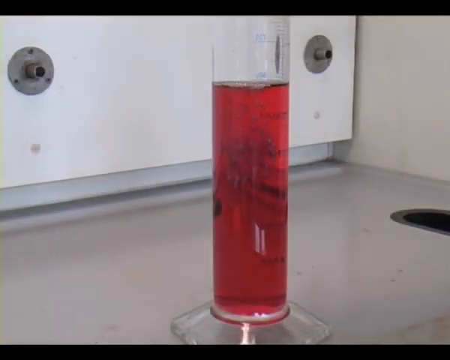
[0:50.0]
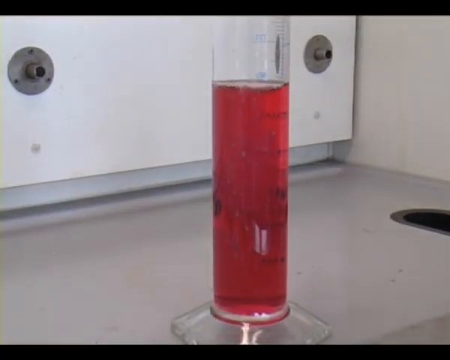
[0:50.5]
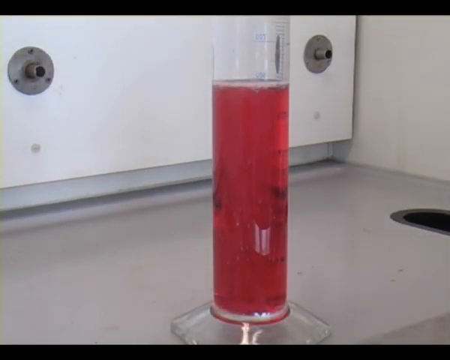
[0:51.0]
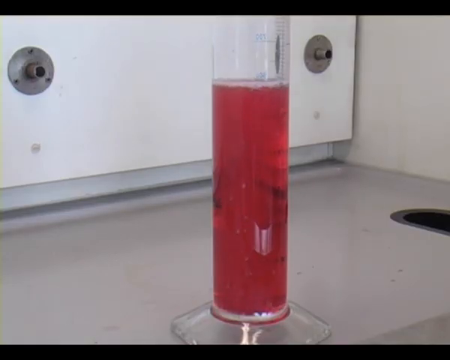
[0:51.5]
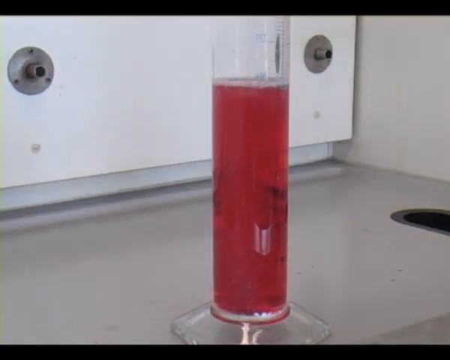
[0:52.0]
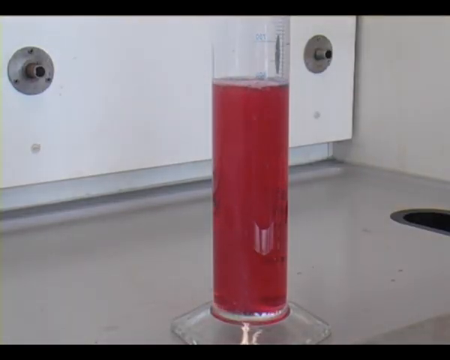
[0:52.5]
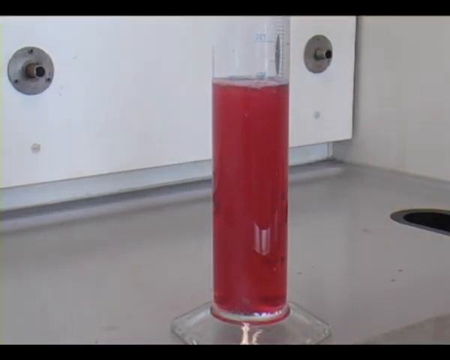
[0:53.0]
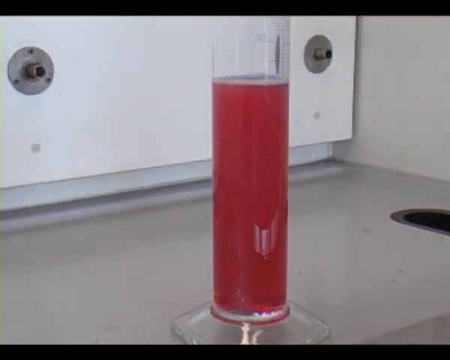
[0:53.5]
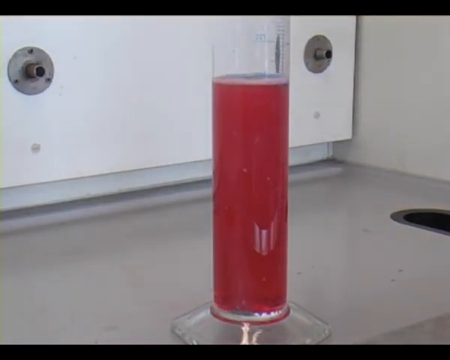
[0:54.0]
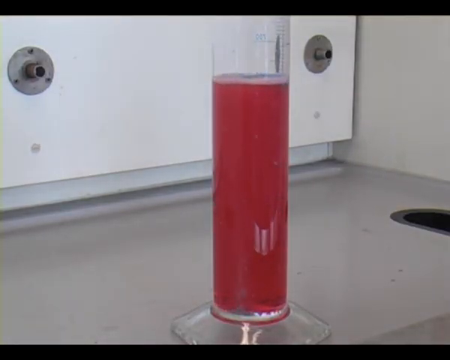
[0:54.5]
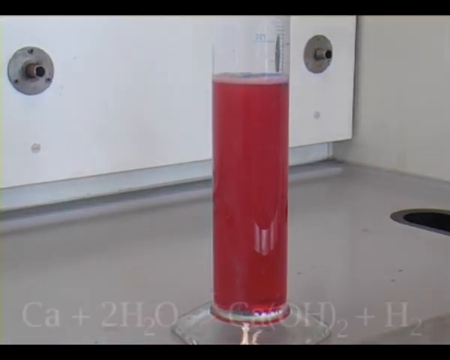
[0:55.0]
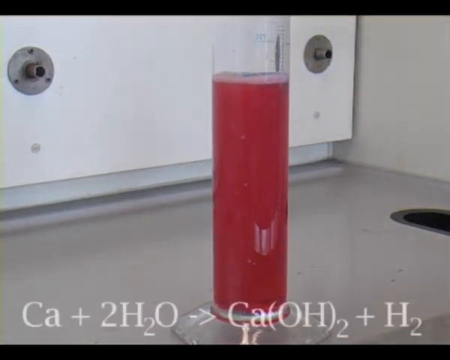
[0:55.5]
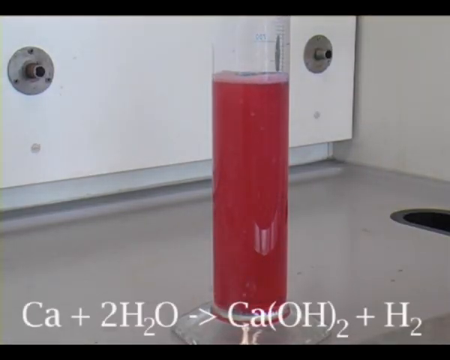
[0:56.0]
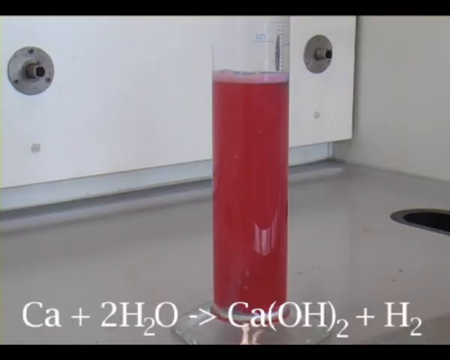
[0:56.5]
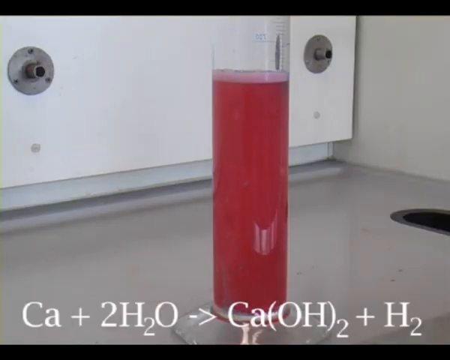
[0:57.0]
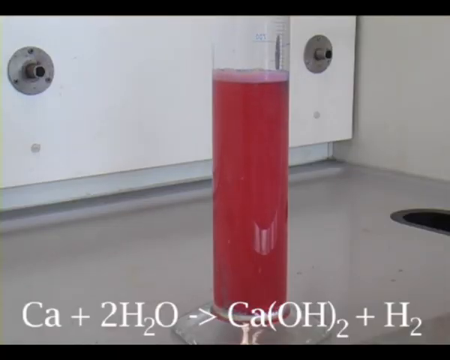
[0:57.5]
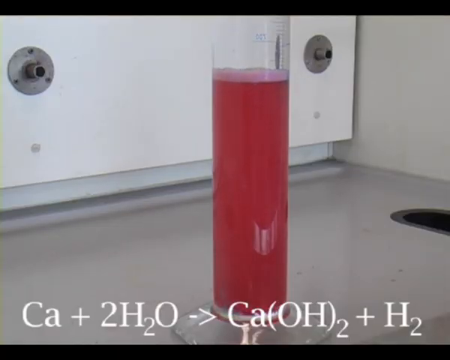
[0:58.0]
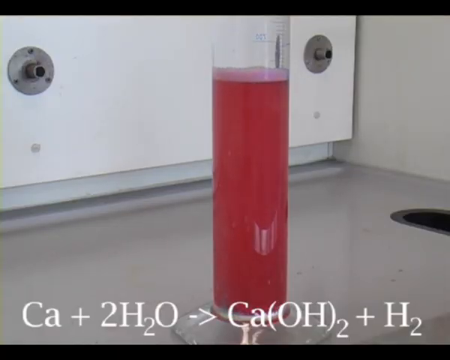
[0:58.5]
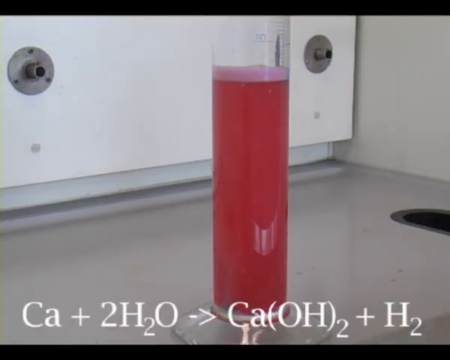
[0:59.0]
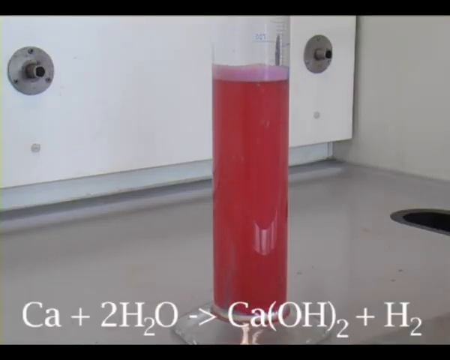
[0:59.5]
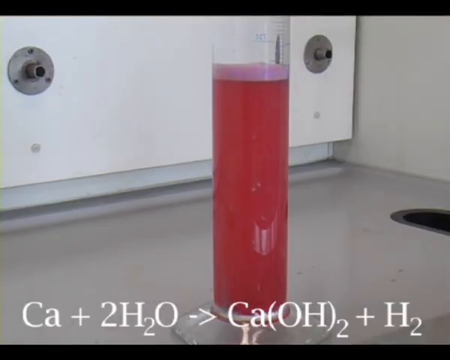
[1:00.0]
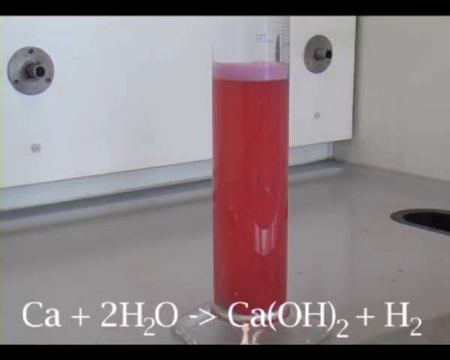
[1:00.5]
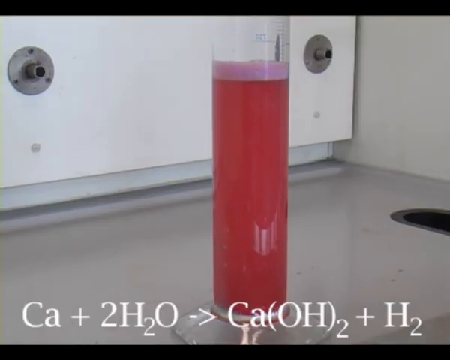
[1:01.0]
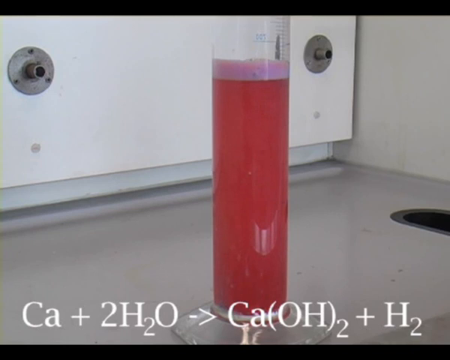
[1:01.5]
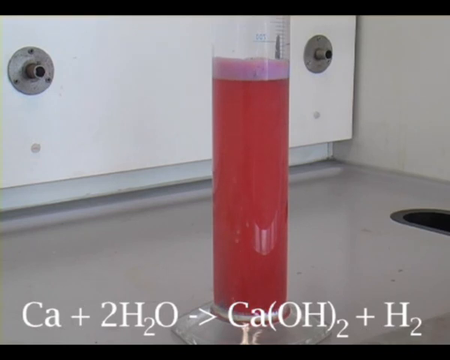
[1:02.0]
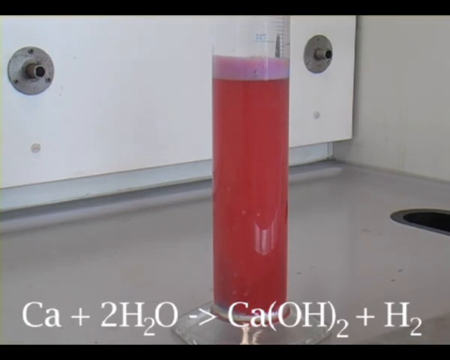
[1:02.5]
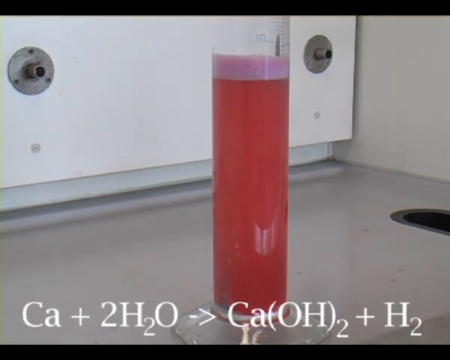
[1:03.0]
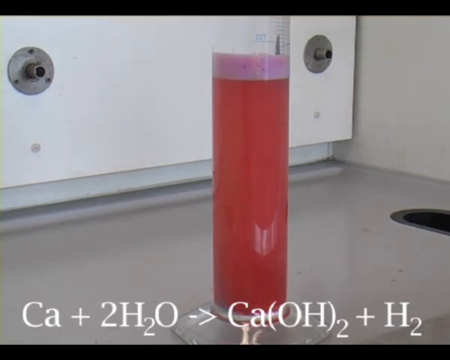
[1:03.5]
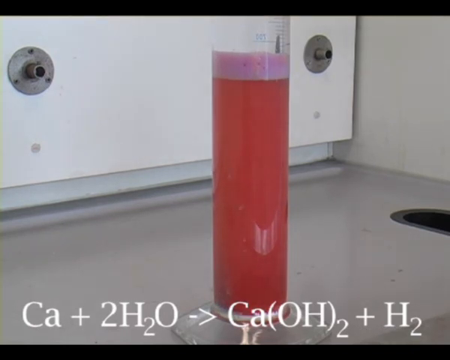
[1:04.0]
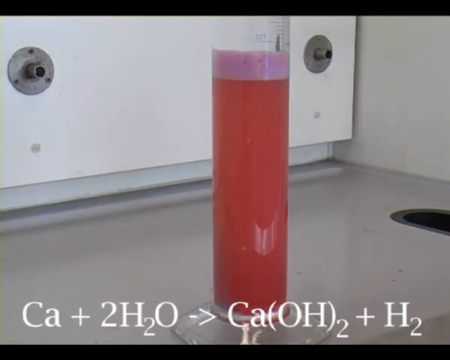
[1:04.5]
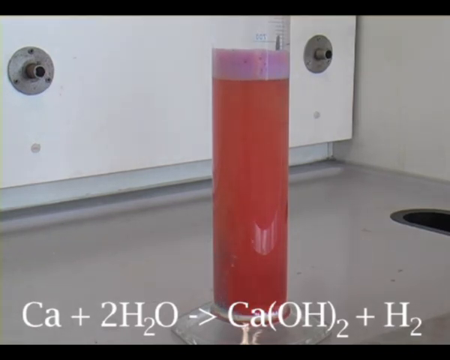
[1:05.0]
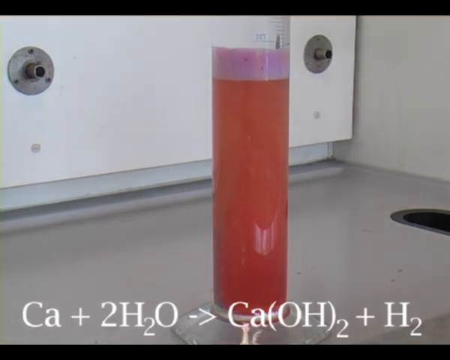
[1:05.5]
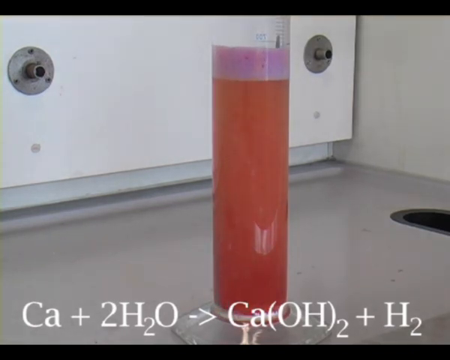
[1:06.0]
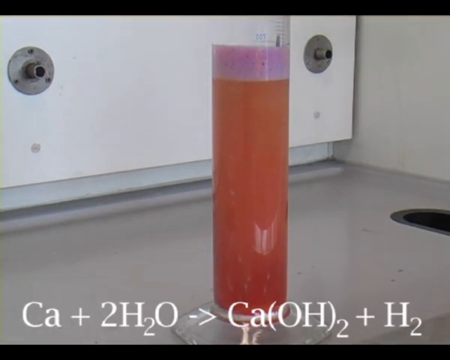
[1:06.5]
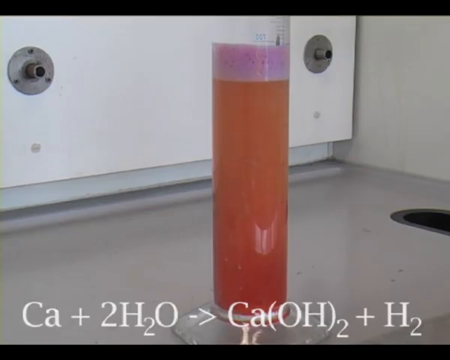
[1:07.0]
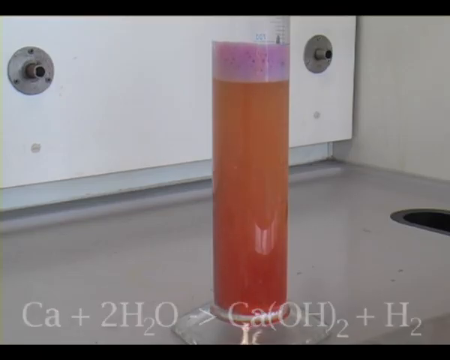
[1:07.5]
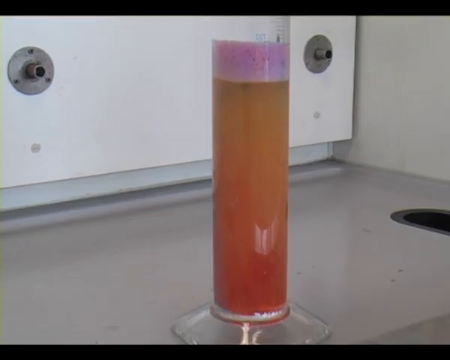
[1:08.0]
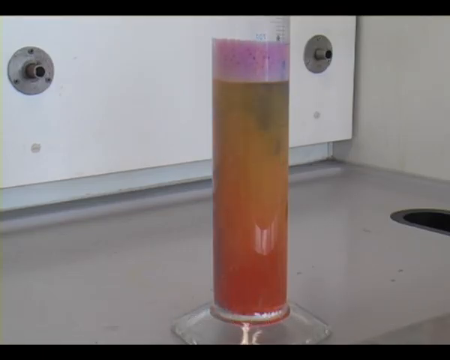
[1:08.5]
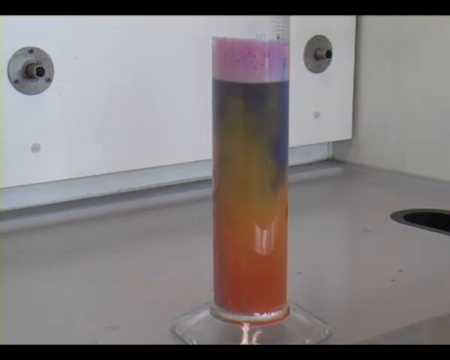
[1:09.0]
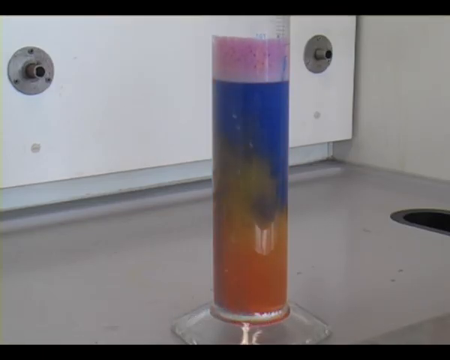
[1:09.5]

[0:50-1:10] A glass canister holds what is apparently red liquid, filled a fair amount of the way up, and something, possibly calcium, has just been dropped in. It reacts and bubbles up. The formula "Ca + 2H2O -> Ca(OH)2 + H2" appears. Some kind of reaction is happening at the top, where pinkish-purplish bubbles form and rise a little higher. The liquid then starts to change color: it is no longer red, the colors seem to mix, and it turns kind of orangish, then a little yellow, then green, and then it starts to go all blue.